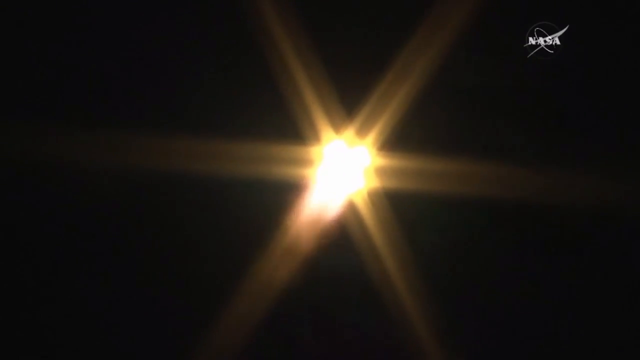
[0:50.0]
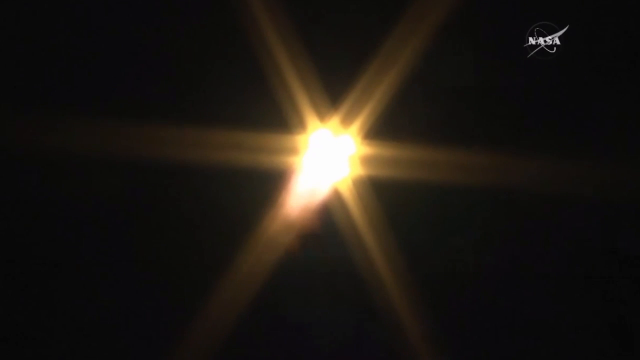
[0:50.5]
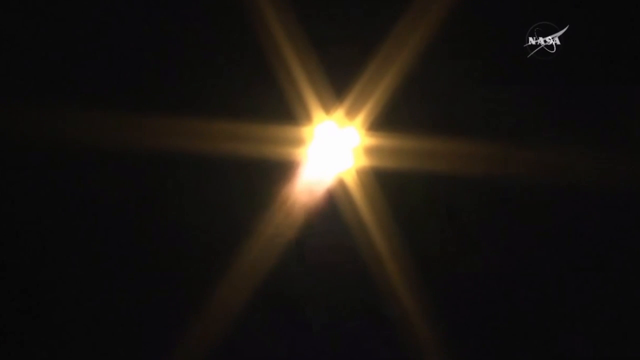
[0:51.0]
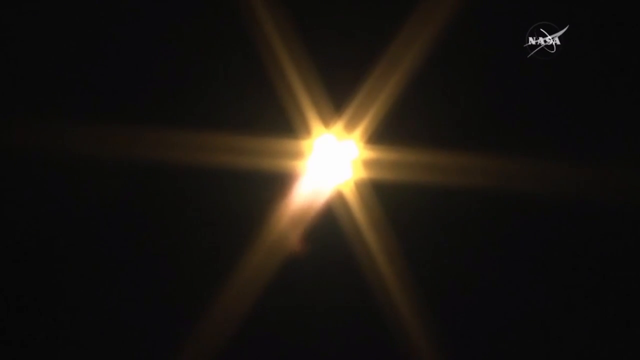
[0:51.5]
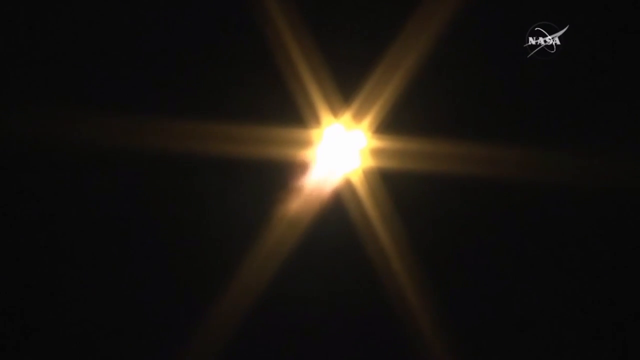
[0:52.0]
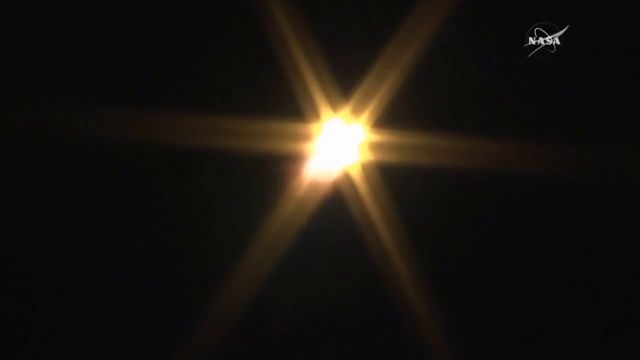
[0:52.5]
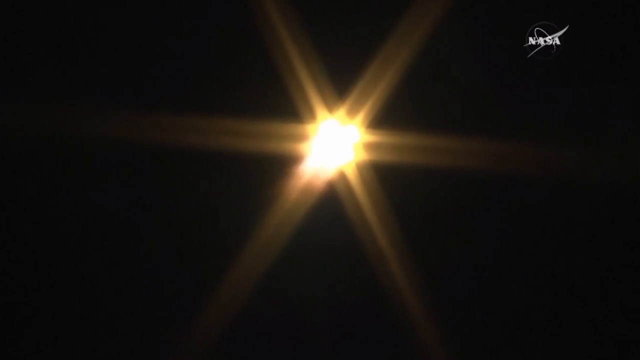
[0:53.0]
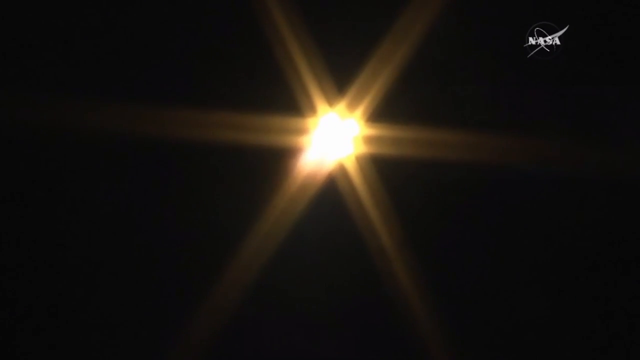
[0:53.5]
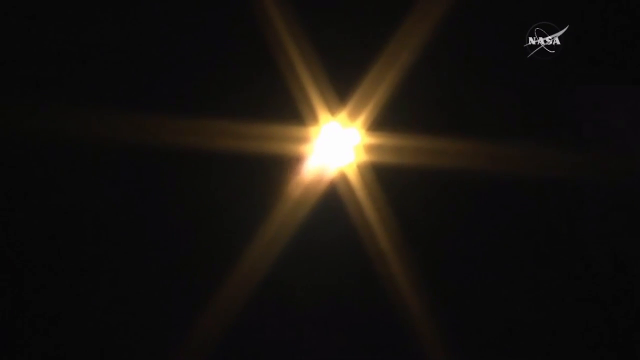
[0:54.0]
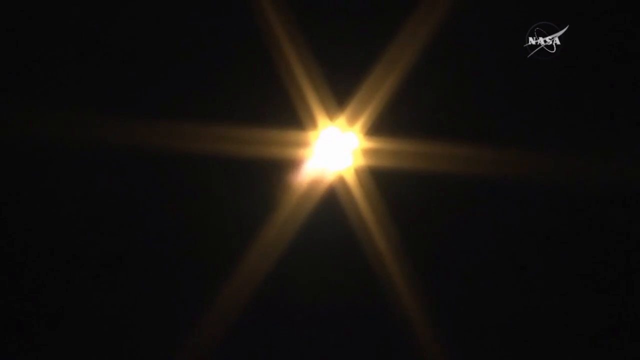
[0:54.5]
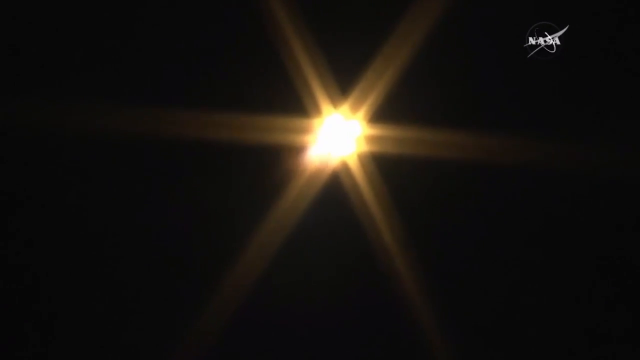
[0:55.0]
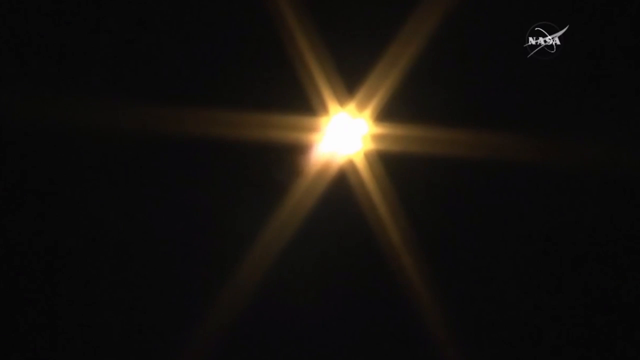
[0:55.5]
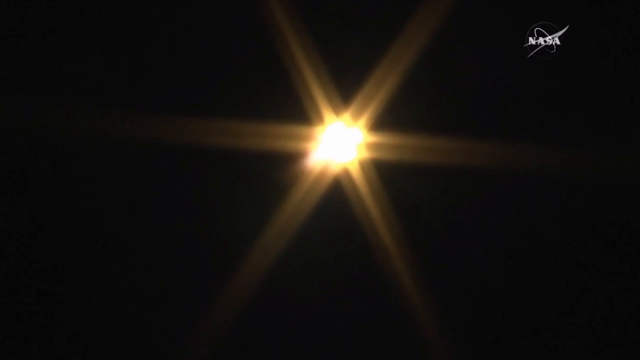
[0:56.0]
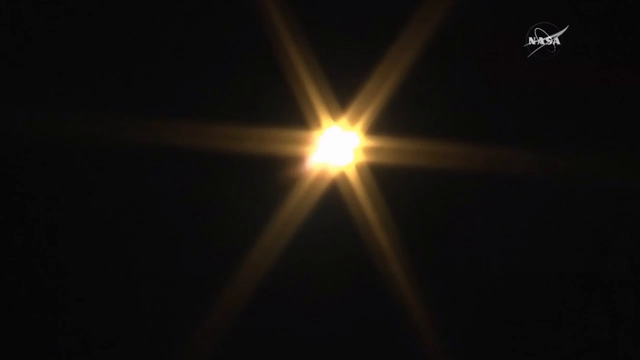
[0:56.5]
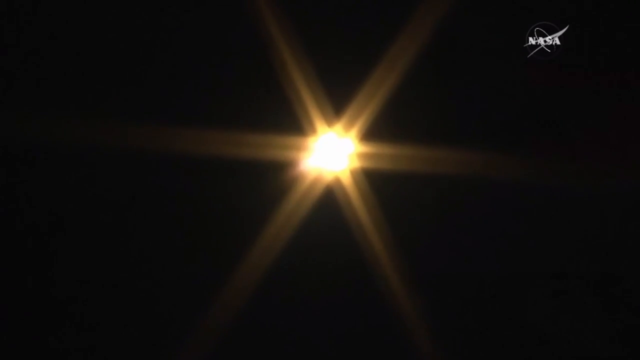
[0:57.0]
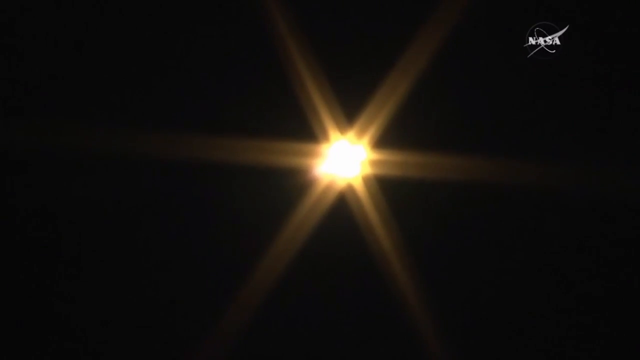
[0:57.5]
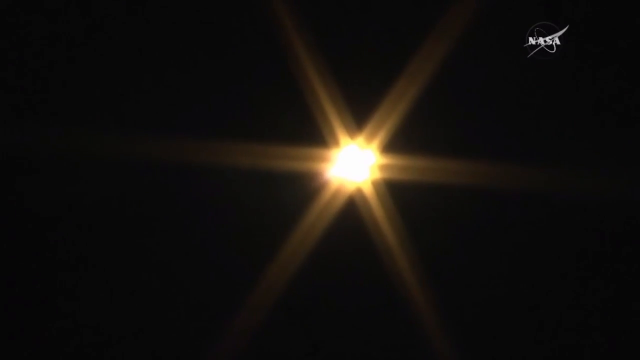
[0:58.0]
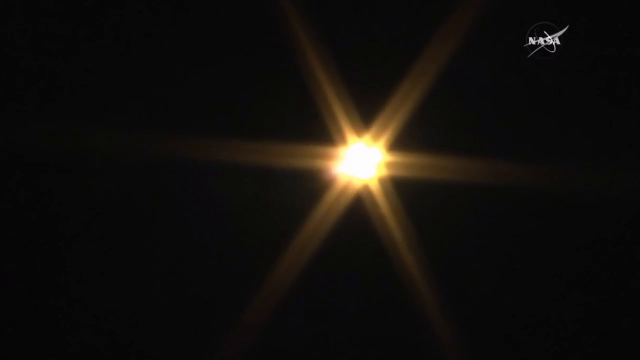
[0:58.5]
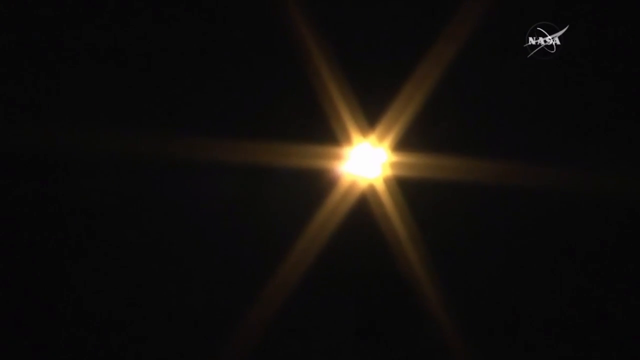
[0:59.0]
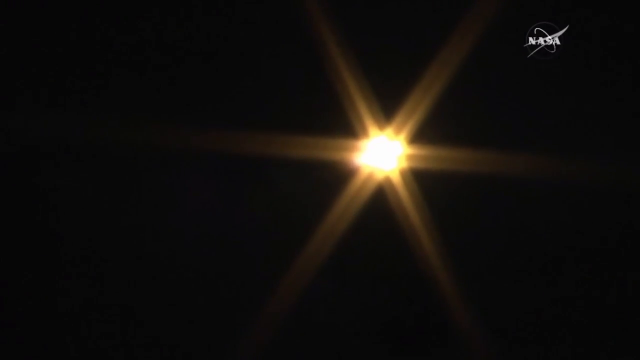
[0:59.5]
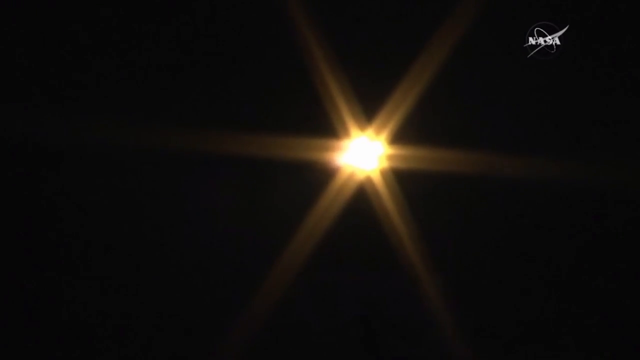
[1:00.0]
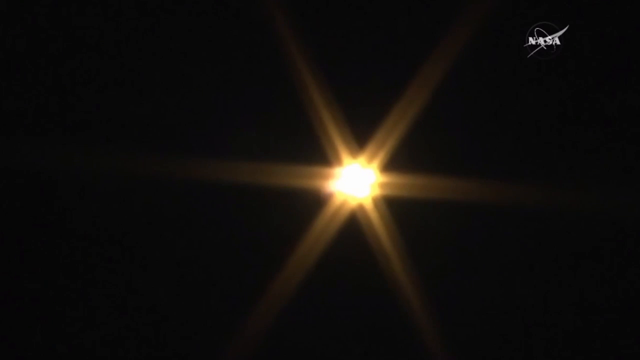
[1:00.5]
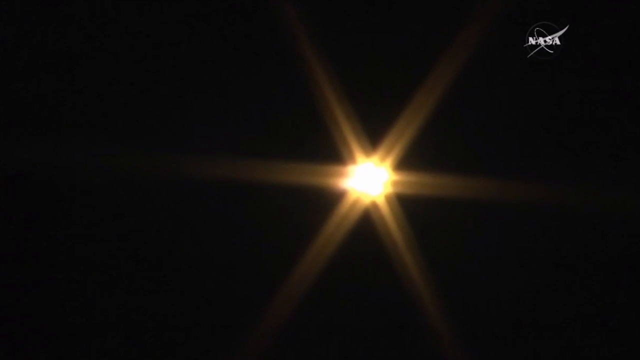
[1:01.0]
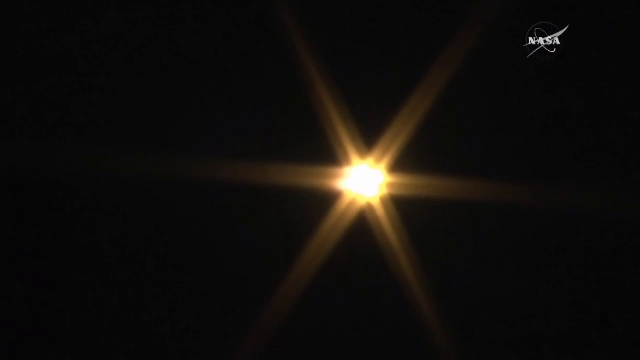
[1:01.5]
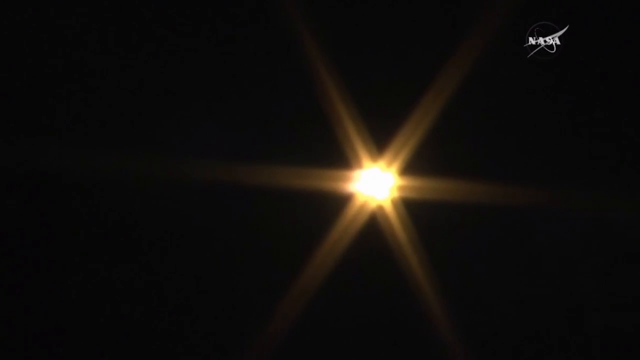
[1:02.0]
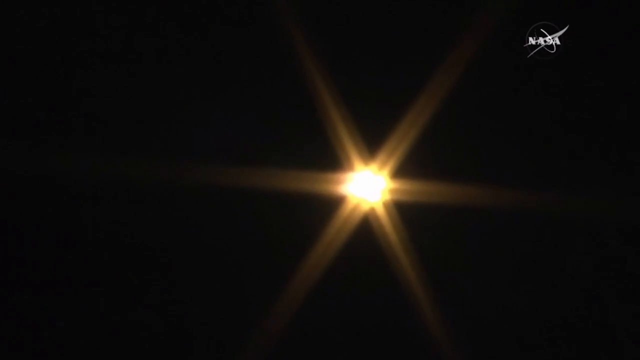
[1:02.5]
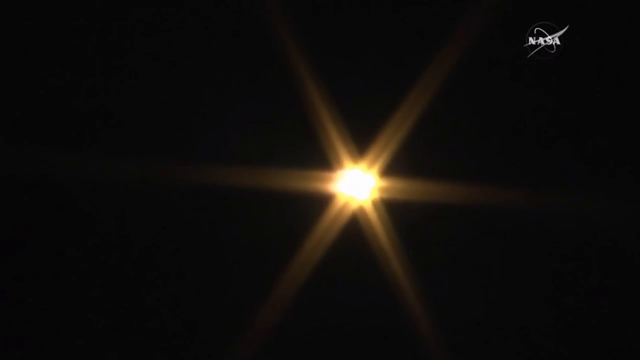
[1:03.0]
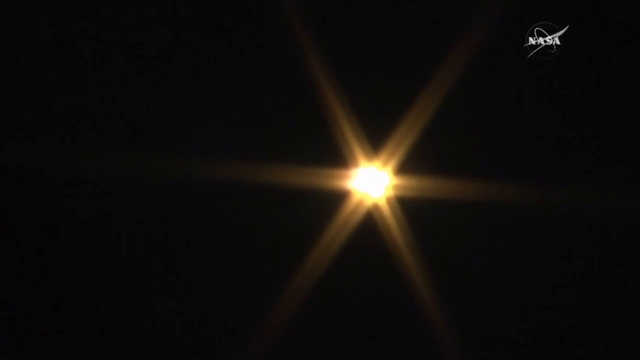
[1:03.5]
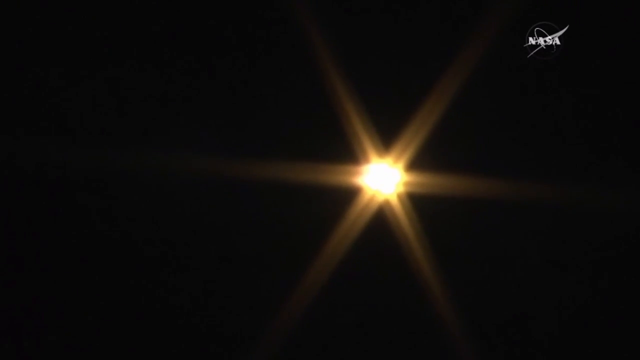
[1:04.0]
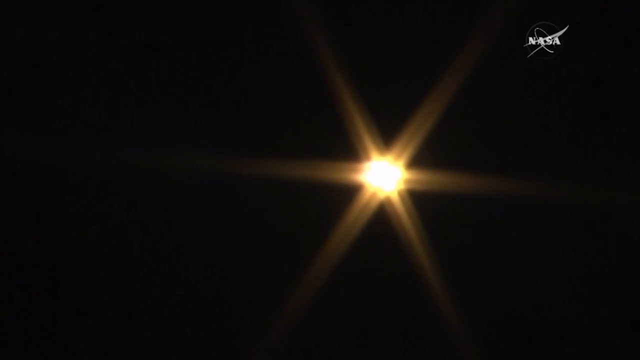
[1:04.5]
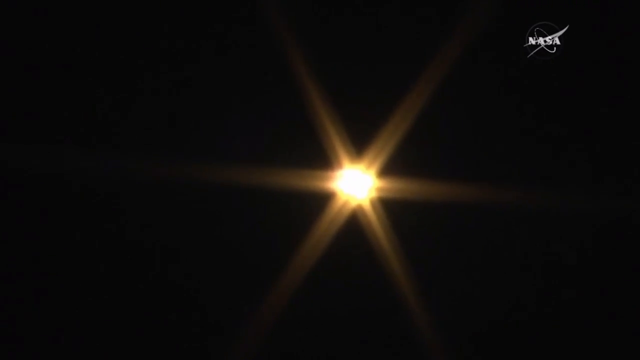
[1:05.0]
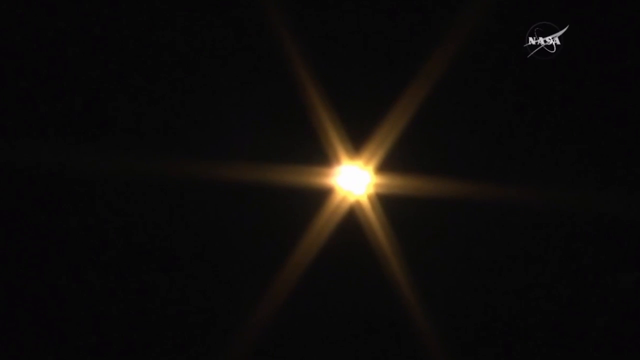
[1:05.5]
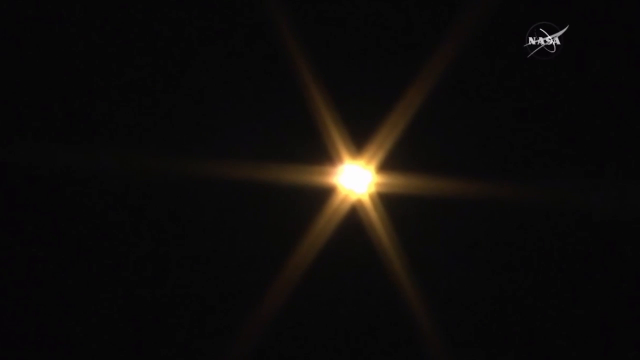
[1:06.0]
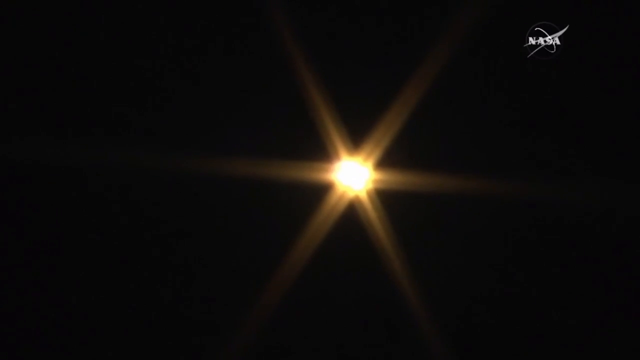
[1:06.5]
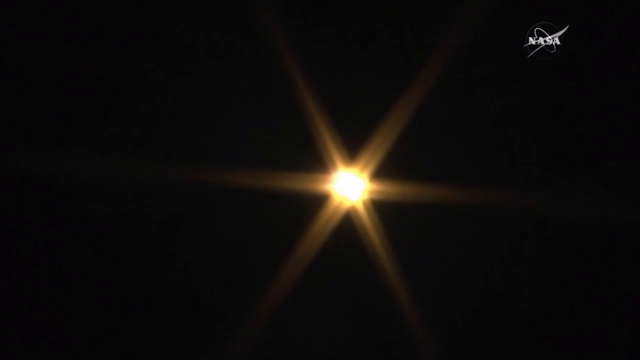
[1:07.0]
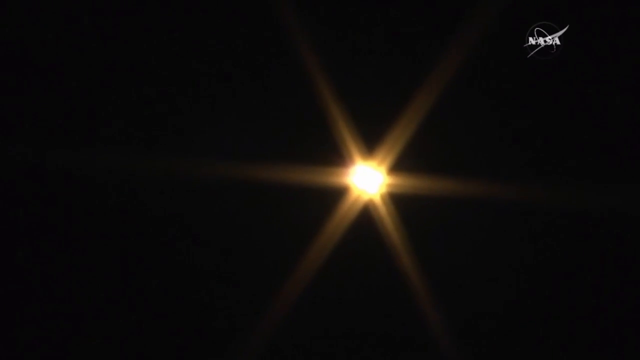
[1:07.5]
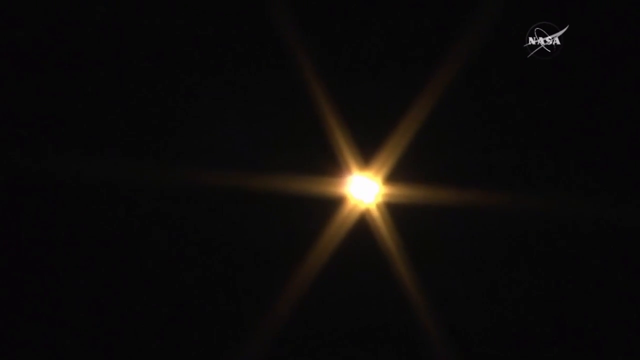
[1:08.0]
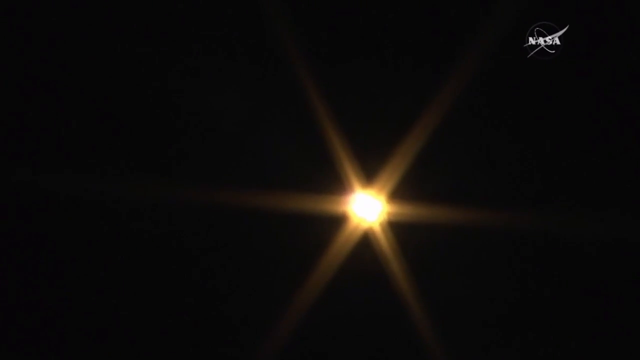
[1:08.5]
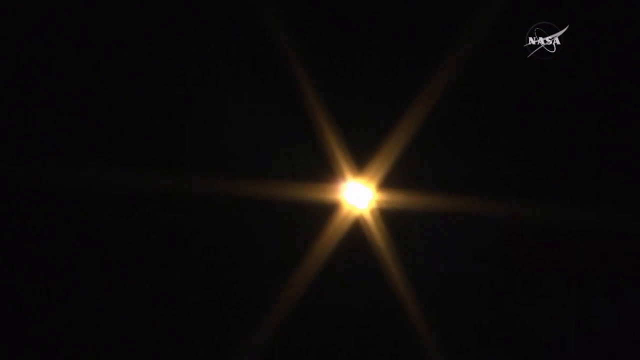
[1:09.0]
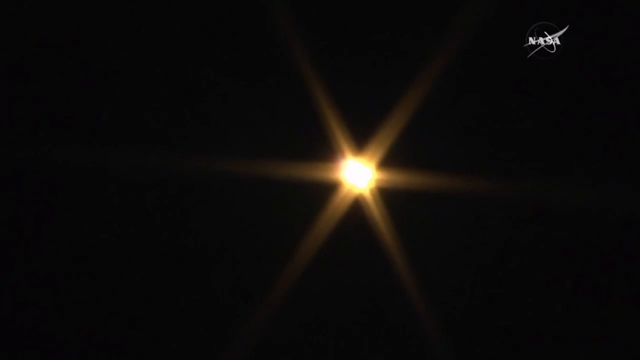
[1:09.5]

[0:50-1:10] The back end of a space shuttle is so far up that it appears only as a bright light, like a bright star, against the night sky, and the spaceship itself cannot be seen. "NASA" appears to be at the top of the screen. Exhaust and a few flames are visible as it climbs higher and higher. The light becomes less glowy and dims as it goes farther up, slowly fading from sight against the pitch black.